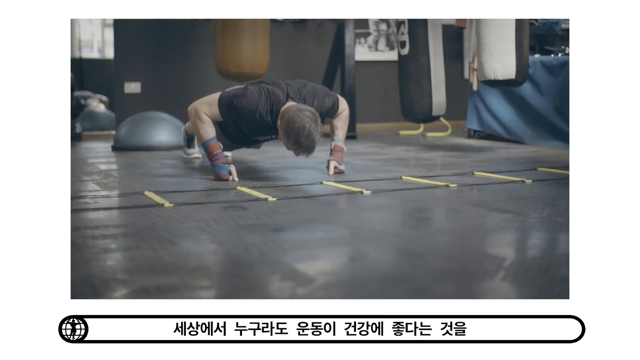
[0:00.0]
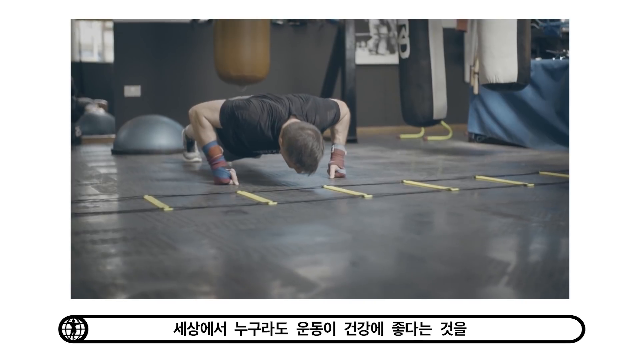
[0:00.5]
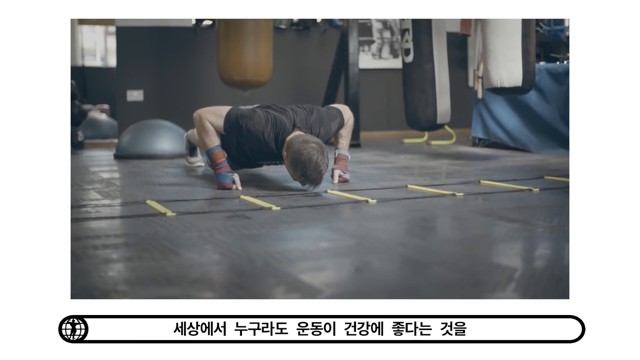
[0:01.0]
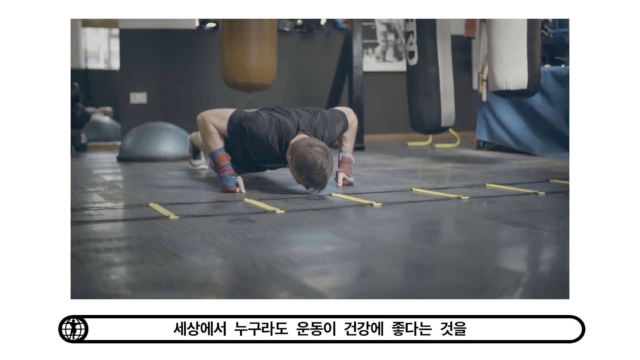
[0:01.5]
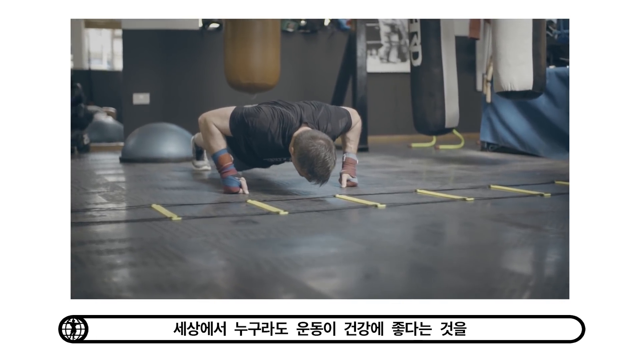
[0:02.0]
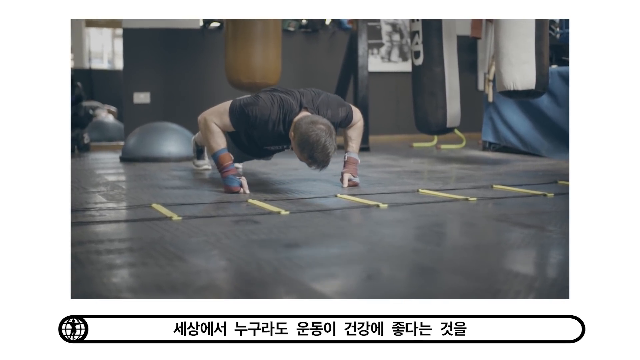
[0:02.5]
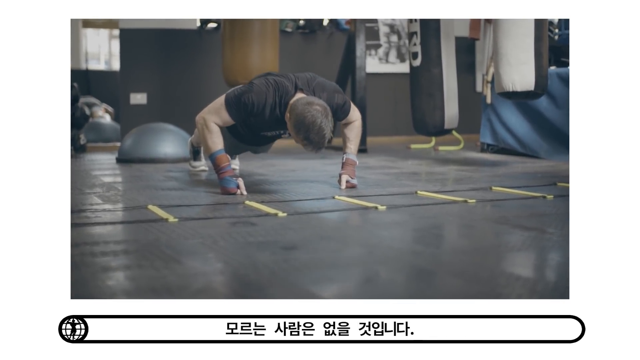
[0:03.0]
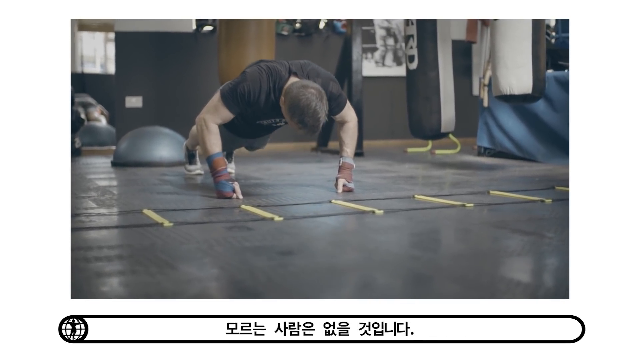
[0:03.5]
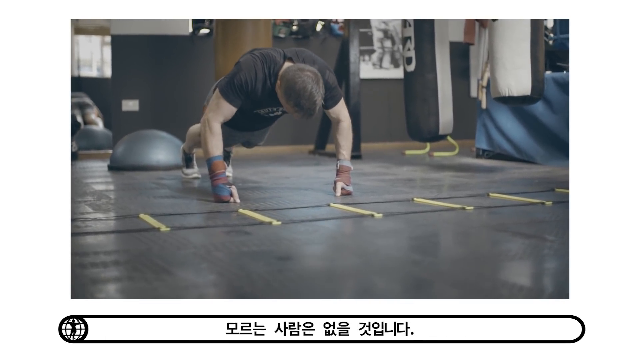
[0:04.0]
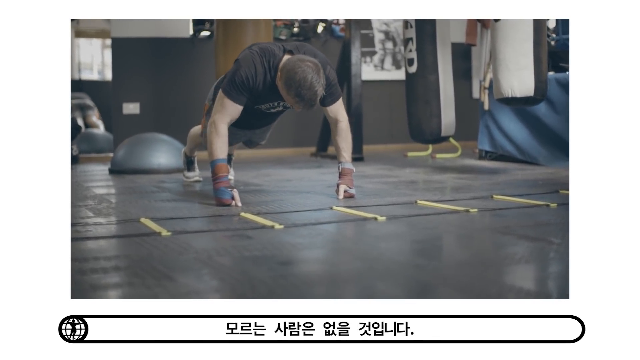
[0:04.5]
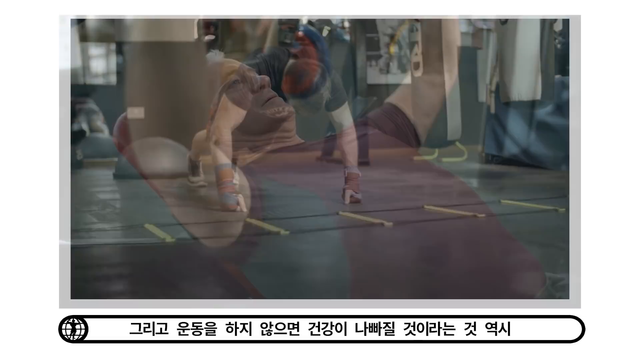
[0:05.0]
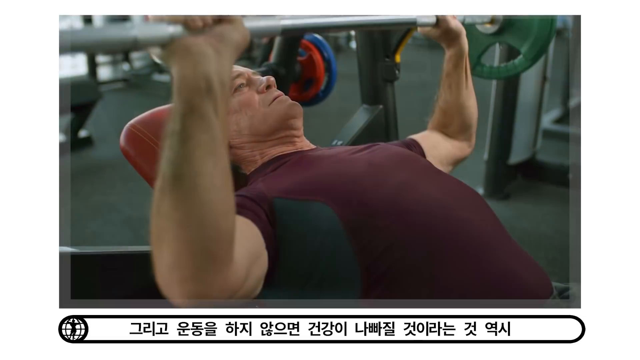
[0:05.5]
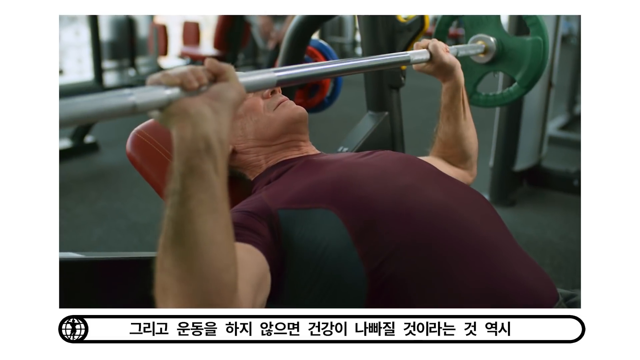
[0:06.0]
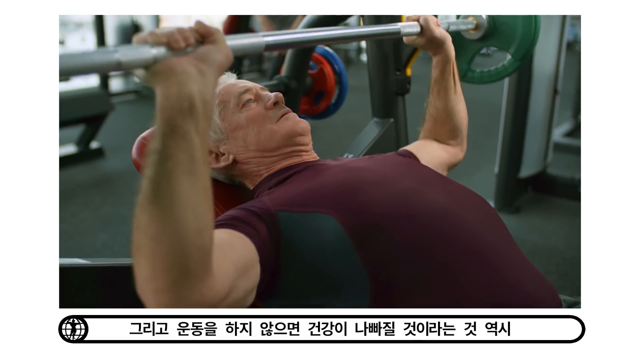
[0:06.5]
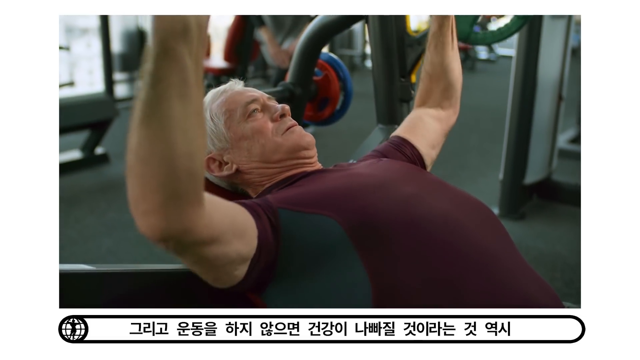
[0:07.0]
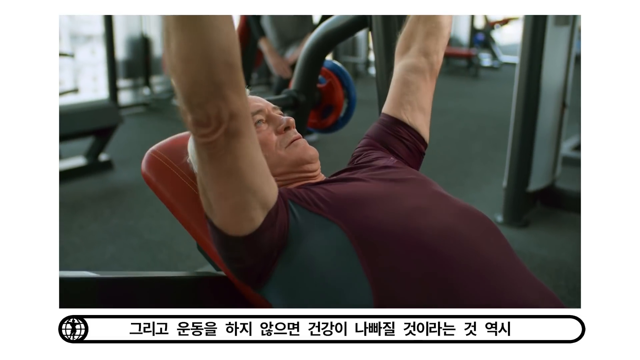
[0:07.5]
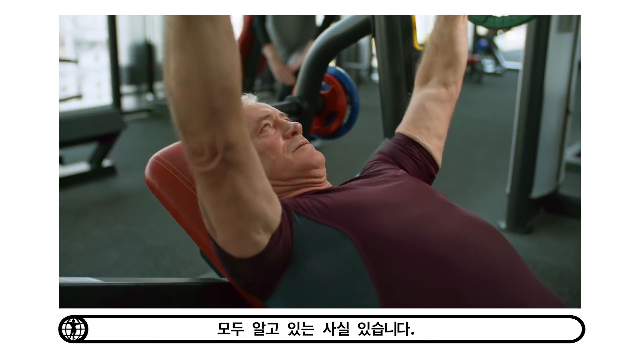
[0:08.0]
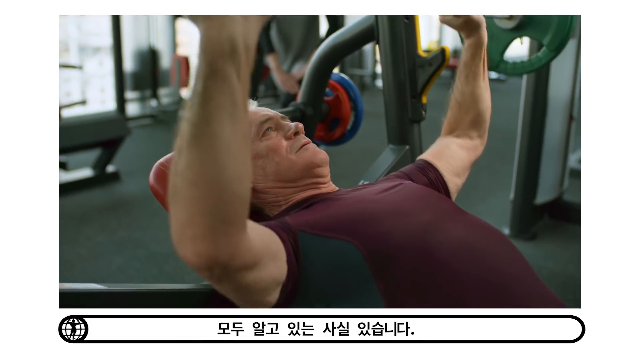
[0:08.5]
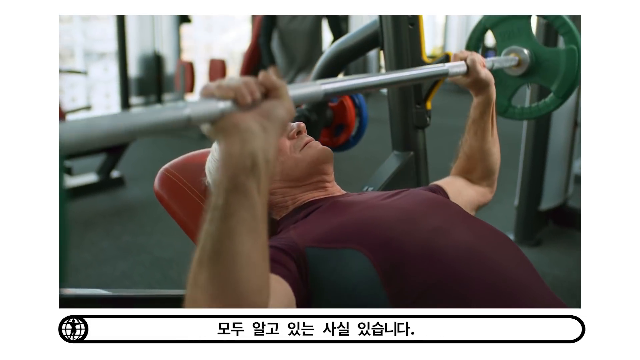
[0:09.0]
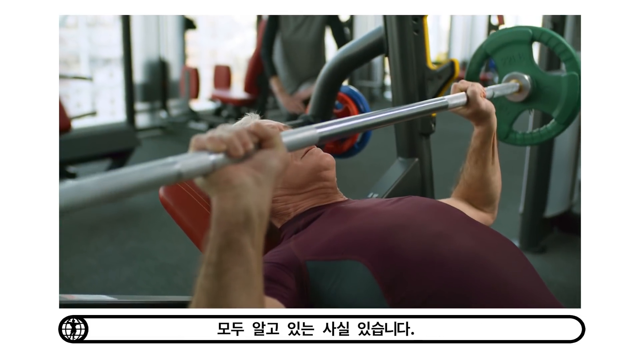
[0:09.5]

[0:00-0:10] A man does push-ups in what looks like a personal gym, facing the floor with his knuckles to the ground. Boxing bags and a yoga ball are behind him. The video then shows an older gentleman lifting heavy weights in what looks like the same gym.